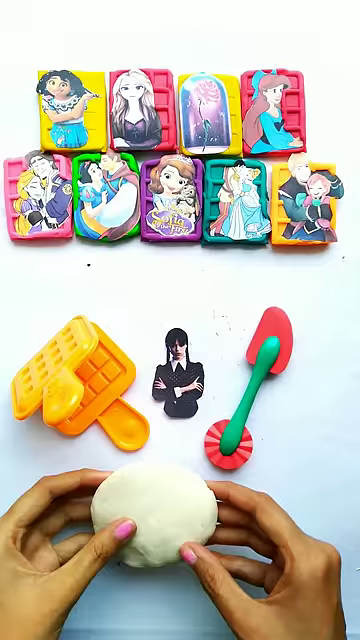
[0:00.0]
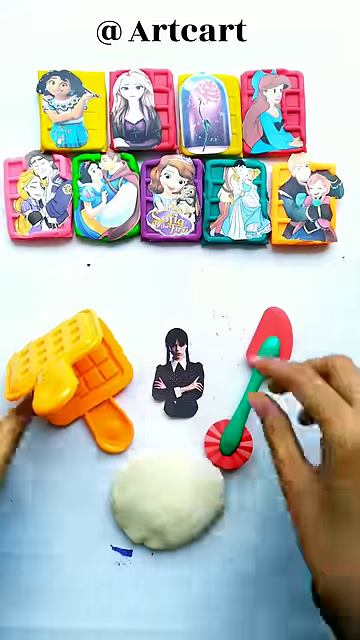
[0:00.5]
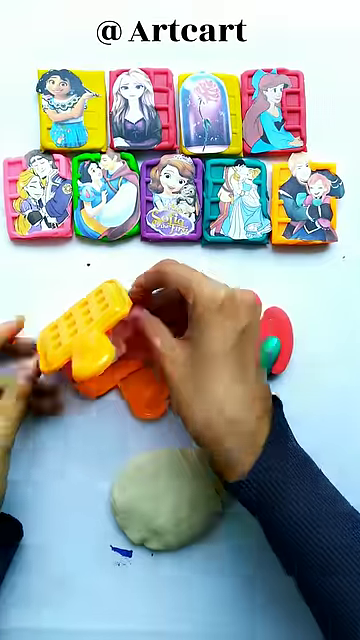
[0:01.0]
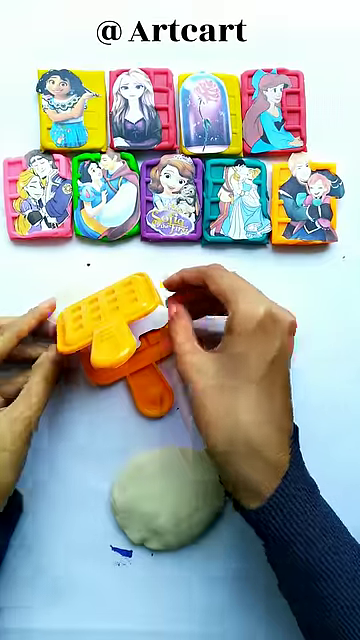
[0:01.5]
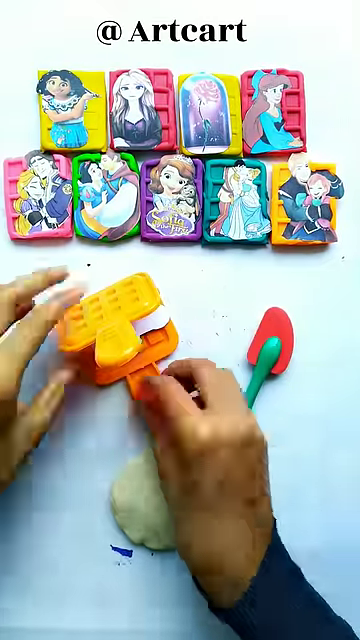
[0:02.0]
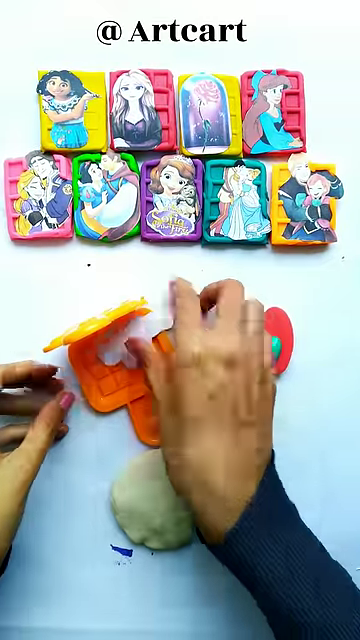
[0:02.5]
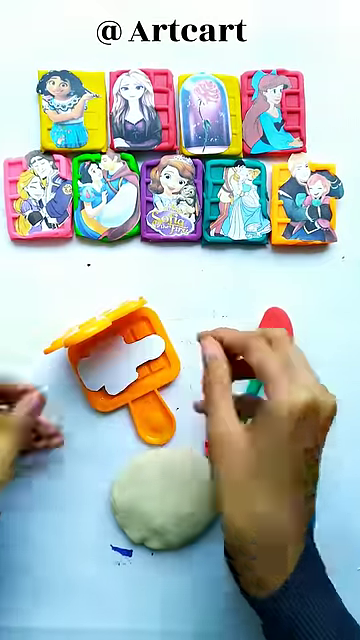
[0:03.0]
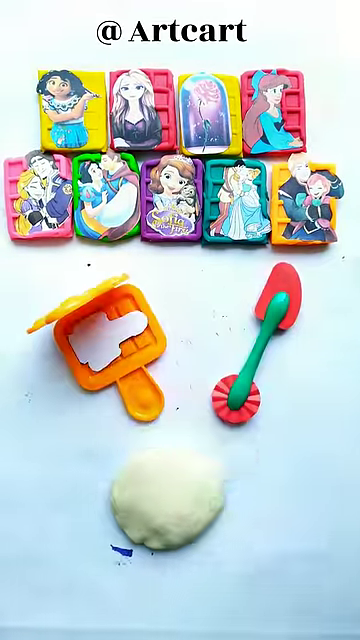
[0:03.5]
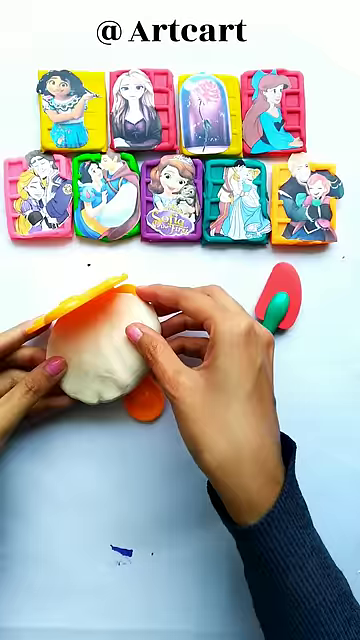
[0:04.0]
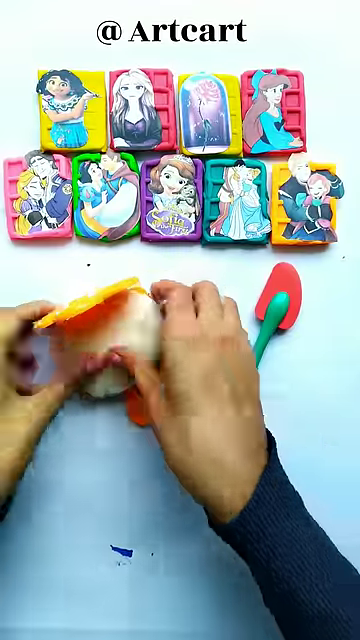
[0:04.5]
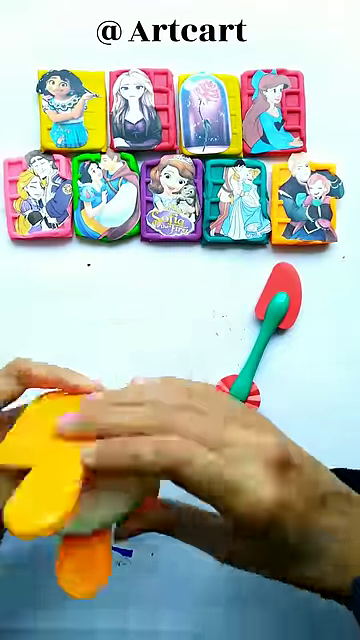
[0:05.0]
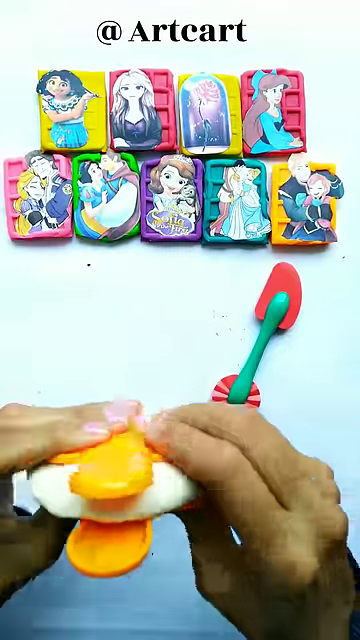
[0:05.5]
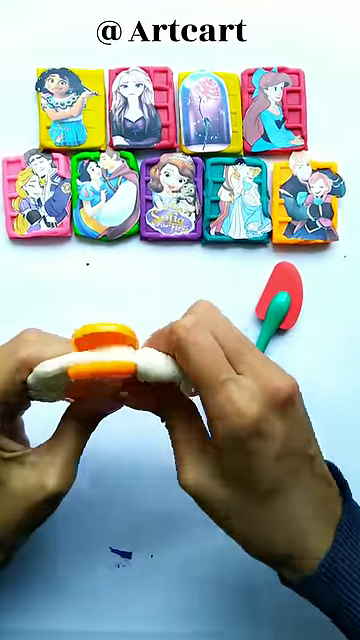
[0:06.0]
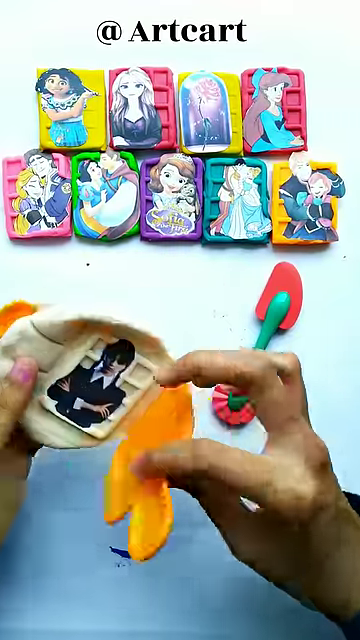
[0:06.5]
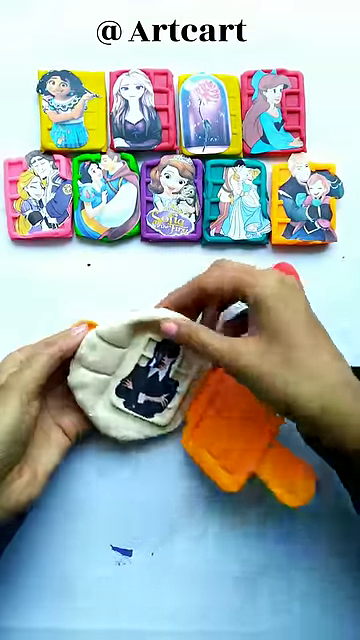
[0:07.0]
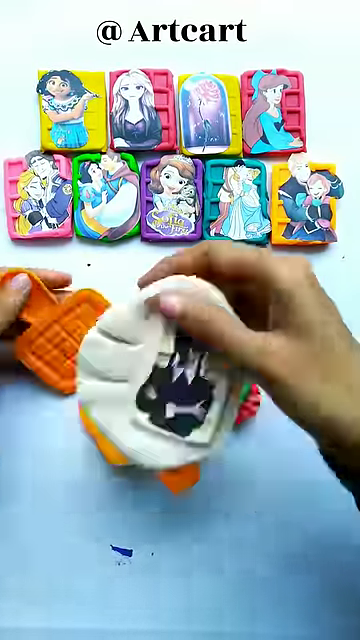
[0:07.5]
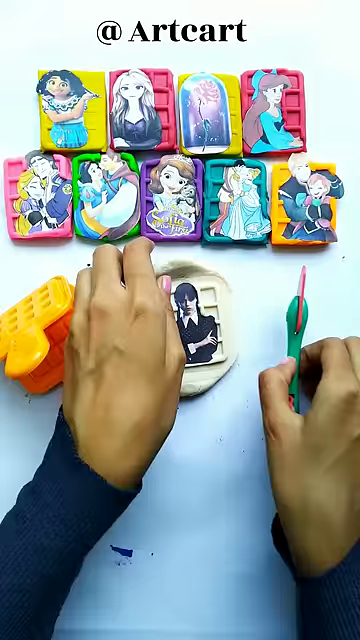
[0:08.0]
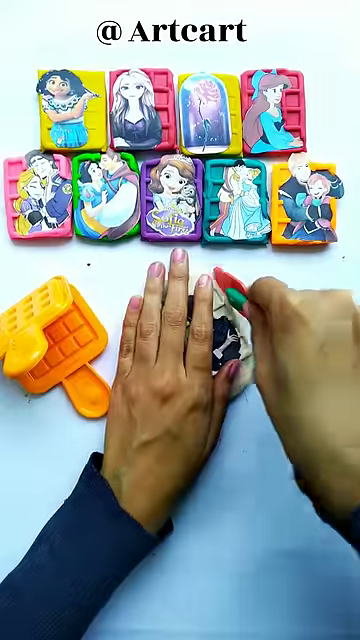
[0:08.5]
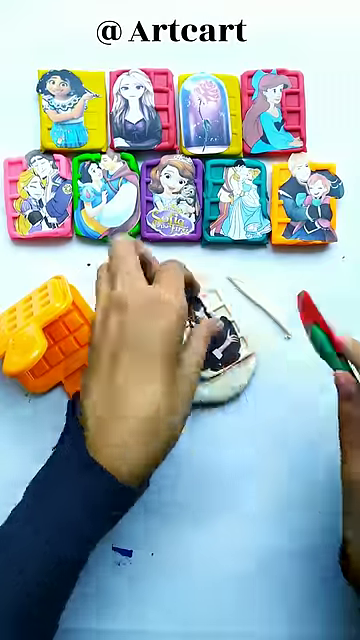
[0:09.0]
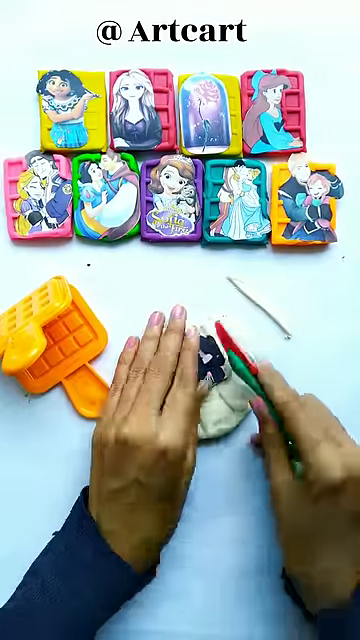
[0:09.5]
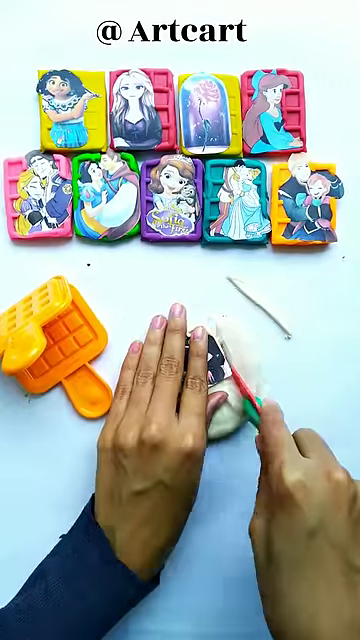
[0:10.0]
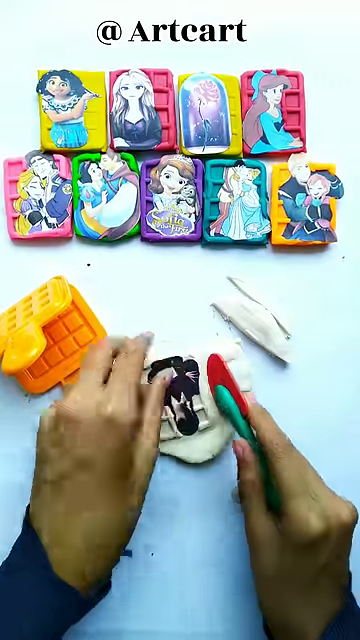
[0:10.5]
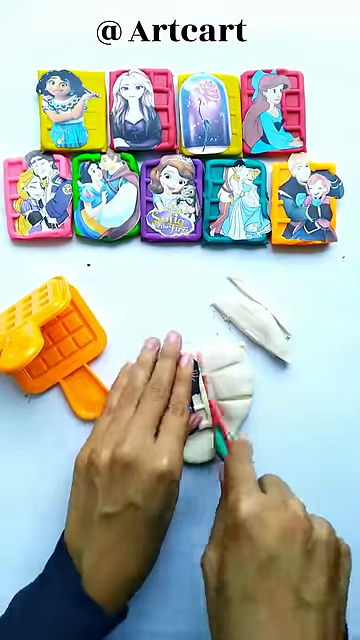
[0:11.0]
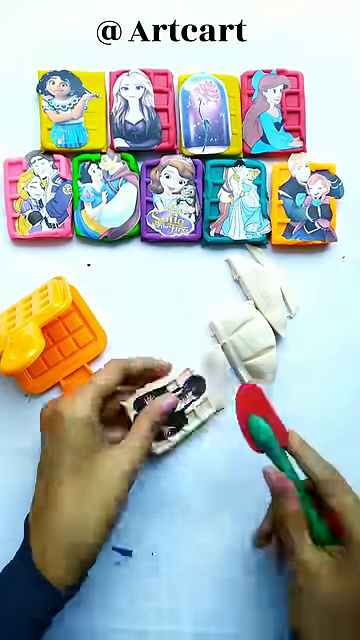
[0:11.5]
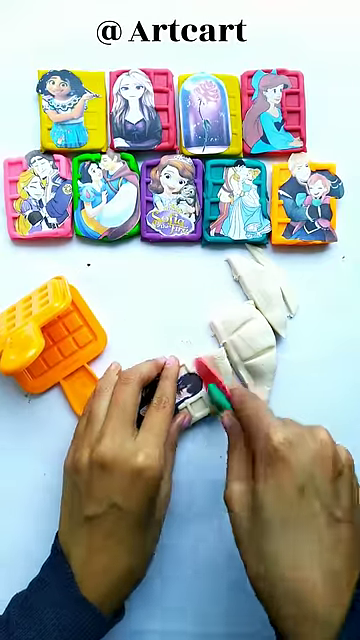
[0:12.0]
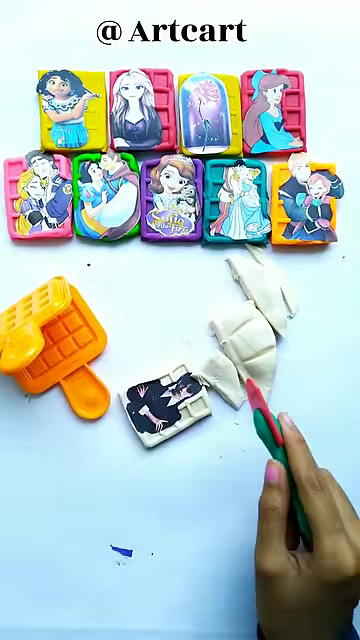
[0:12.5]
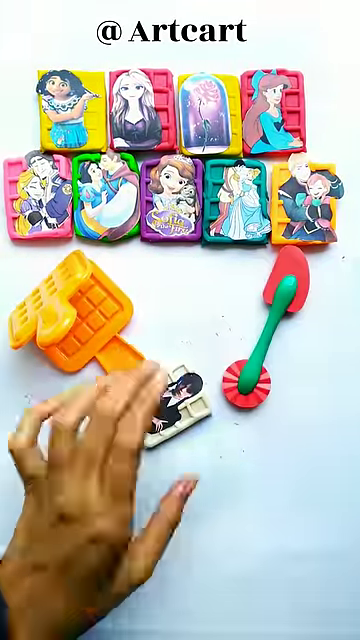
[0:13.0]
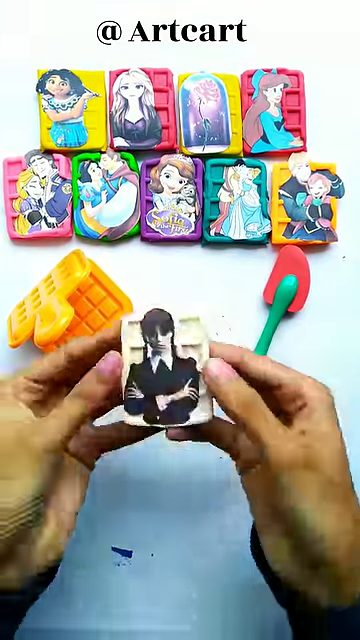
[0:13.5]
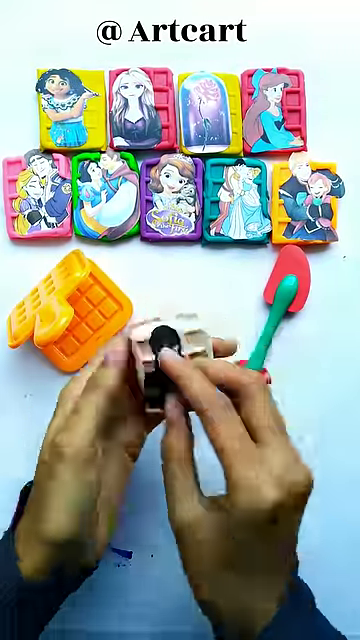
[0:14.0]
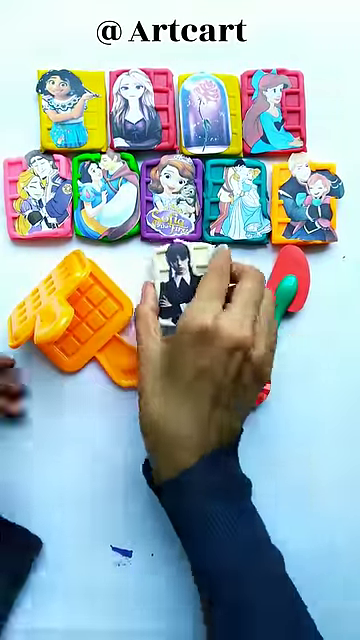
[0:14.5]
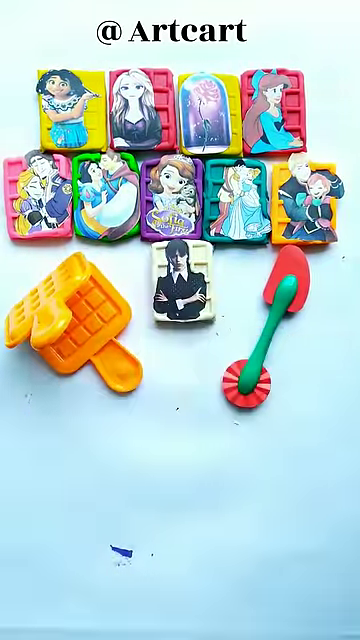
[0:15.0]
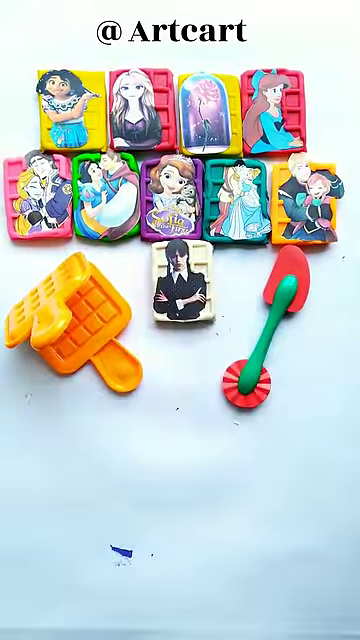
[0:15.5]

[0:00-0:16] Someone's hands move in fast motion as they work with Play-Doh tools. Some finished products are already at the top of the screen, underneath black text that says "at art cart." These are multicolored waffles with character cutouts put on them, a different character on each, although some have two characters. The one in the upper left is Isabel from Encanto, and the one in the upper right is Ariel's human form from The Little Mermaid. The second one in the second row is Snow White and Prince Charming, and the one in the lower right of the second row is Anna and Kristoff; the other characters are unidentified because of the somewhat low resolution. Each one has a different colored waffle: the top two have two yellows and two reds, while the bottom row has pink, green, purple, teal, and orange. The person then makes a white waffle. They take a cutout of Wednesday in a suit with his arms folded and put it in the Play-Doh waffle maker, then put white Play-Doh on it and press down until it is adhered to the waffle. They take it out and pick up a tool with a spatula on one end and a gear shape on the other, using the spatula end to cut off the ends of the waffle so that it is rectangular.